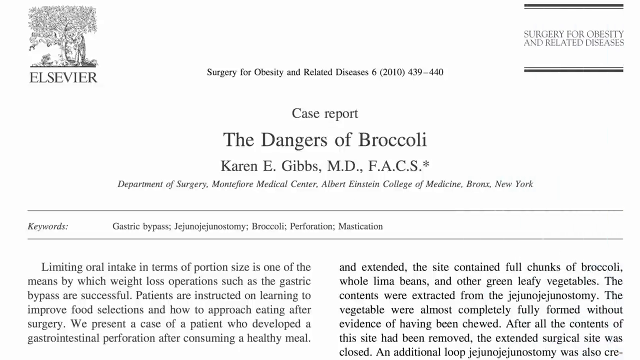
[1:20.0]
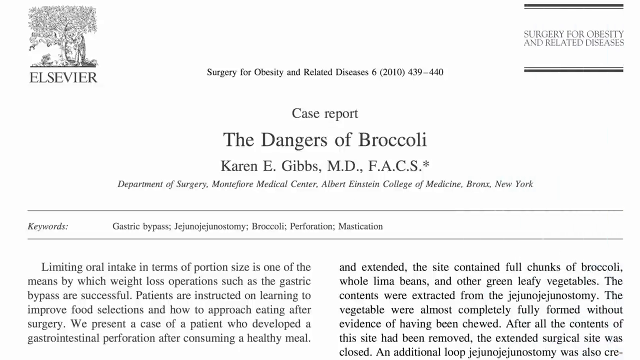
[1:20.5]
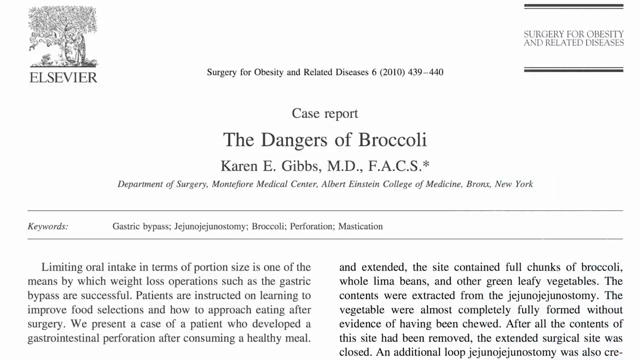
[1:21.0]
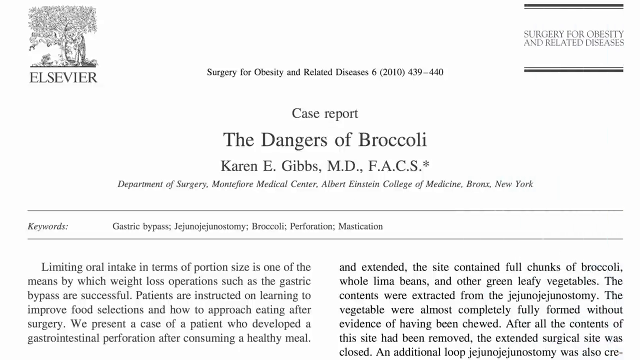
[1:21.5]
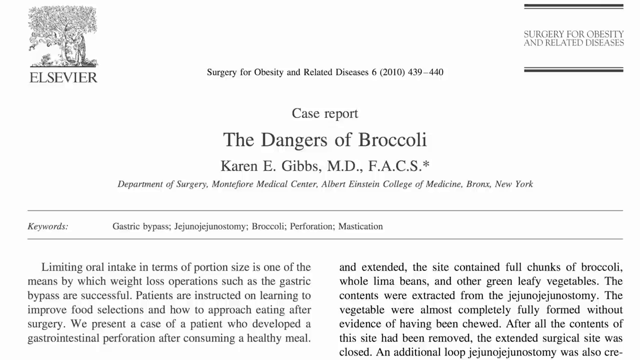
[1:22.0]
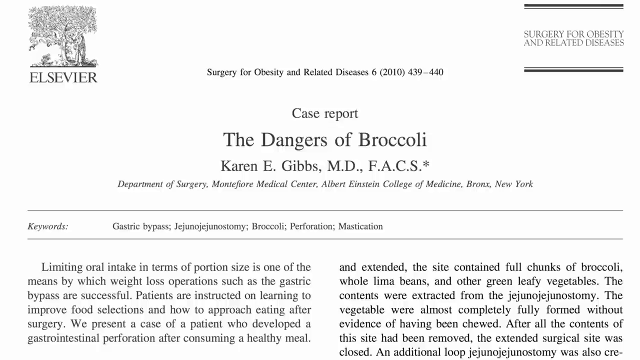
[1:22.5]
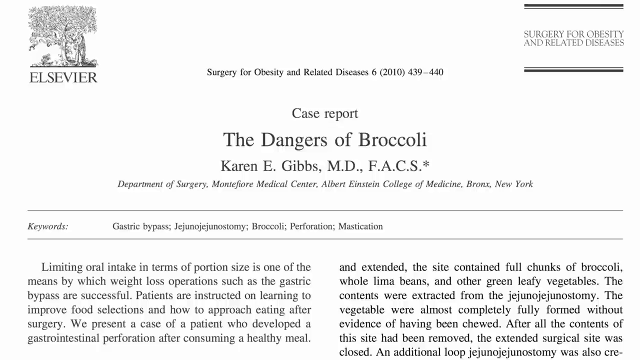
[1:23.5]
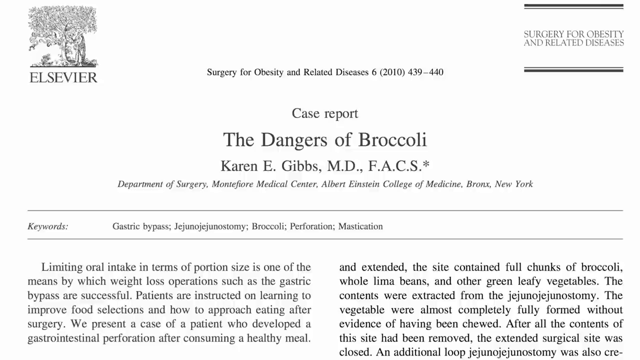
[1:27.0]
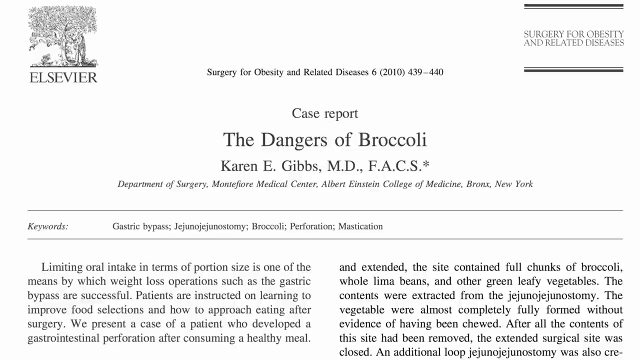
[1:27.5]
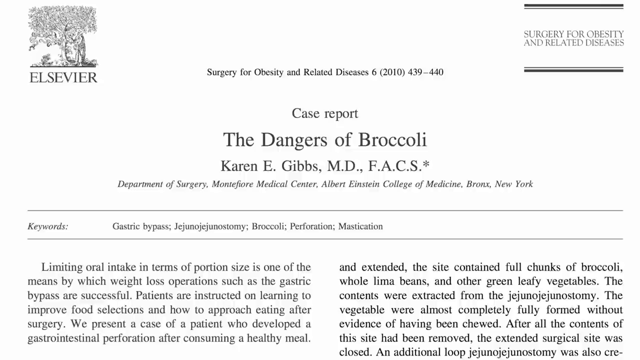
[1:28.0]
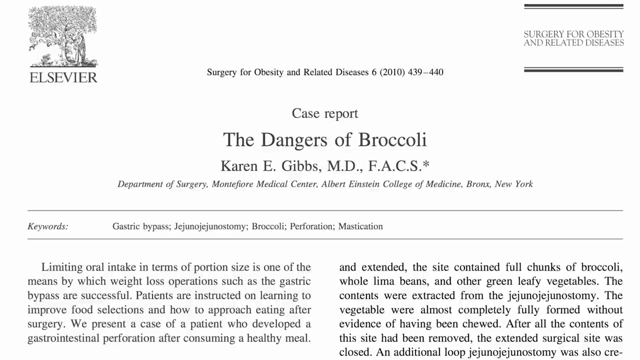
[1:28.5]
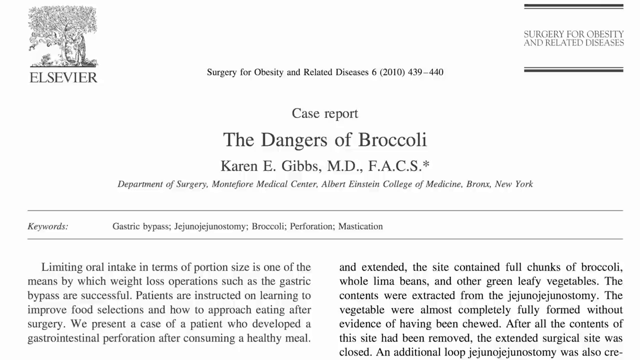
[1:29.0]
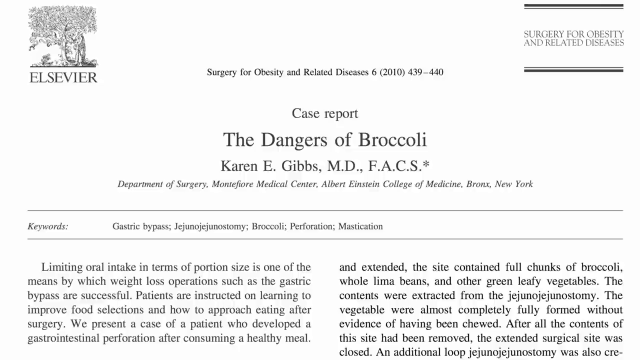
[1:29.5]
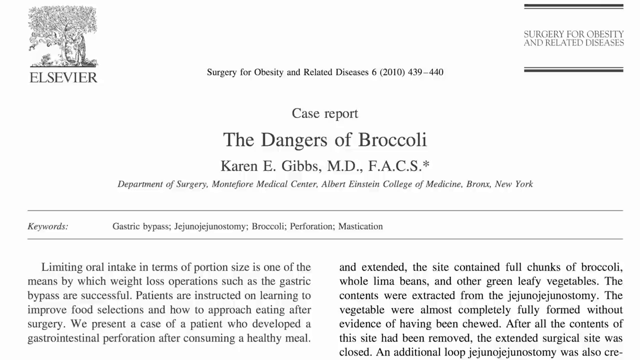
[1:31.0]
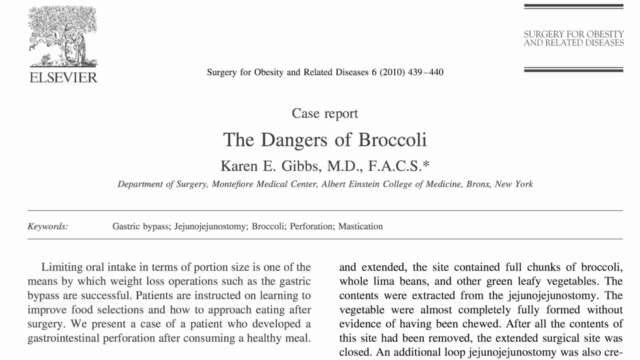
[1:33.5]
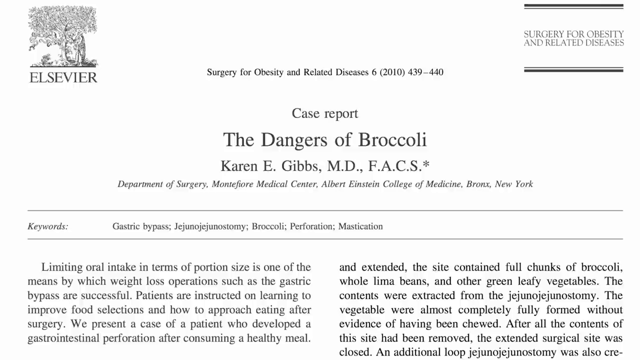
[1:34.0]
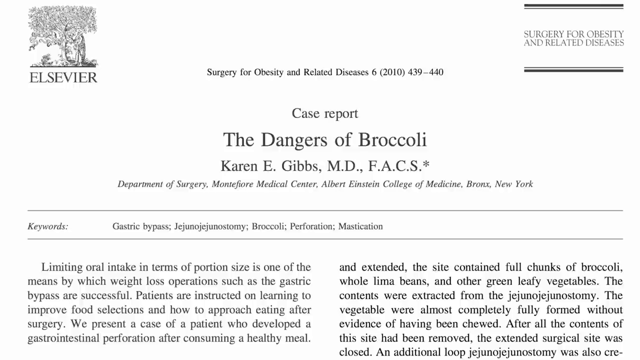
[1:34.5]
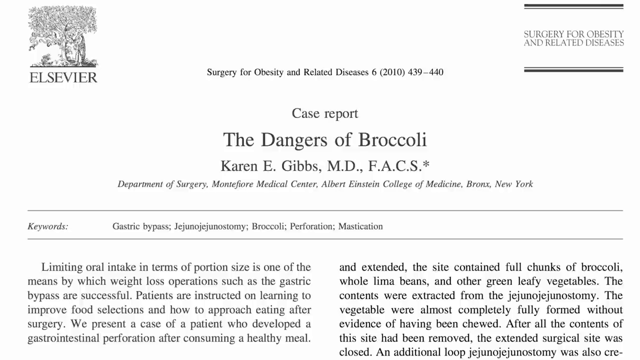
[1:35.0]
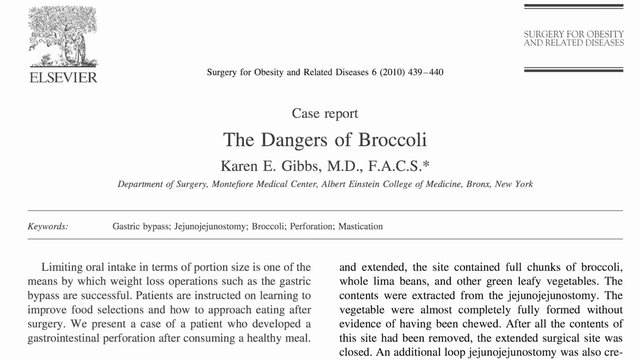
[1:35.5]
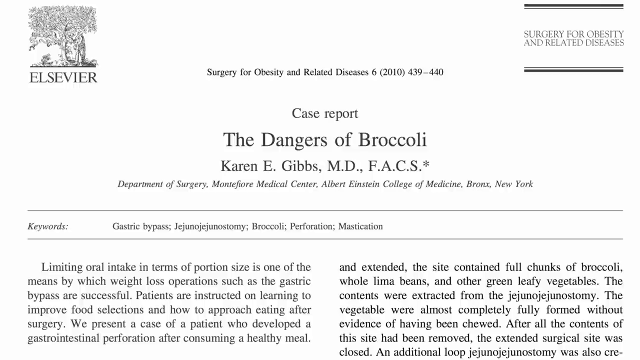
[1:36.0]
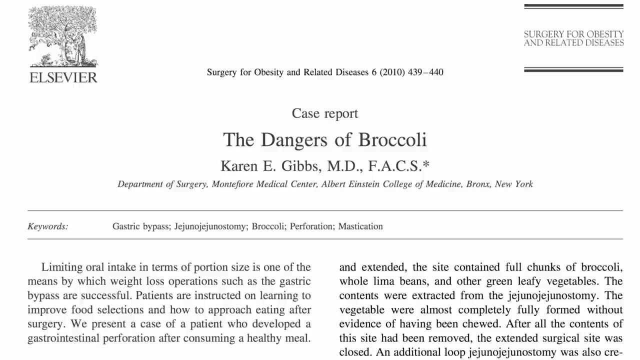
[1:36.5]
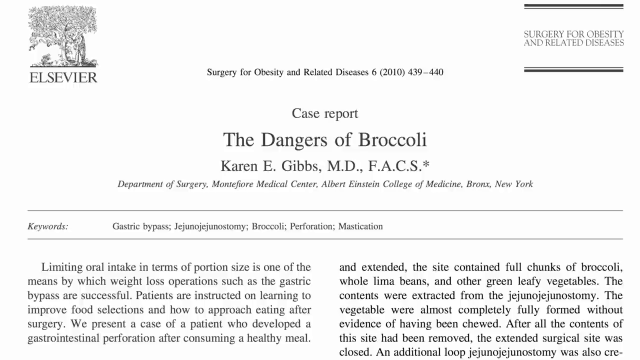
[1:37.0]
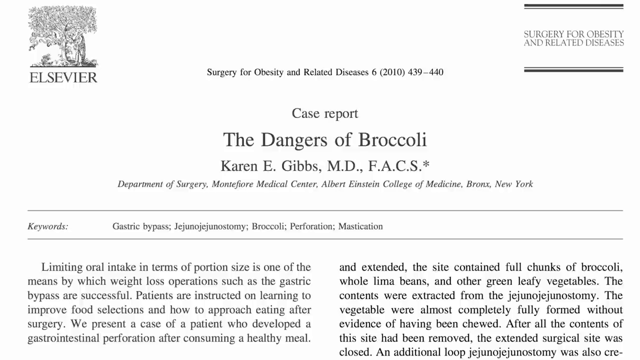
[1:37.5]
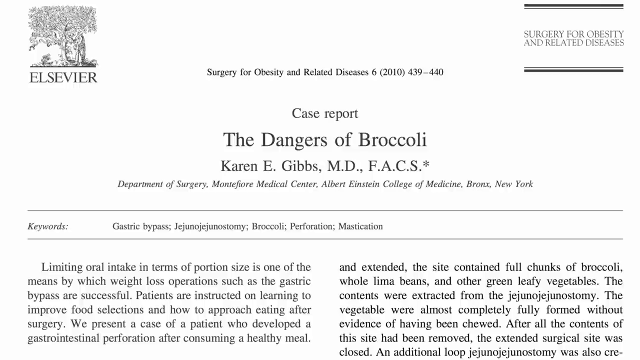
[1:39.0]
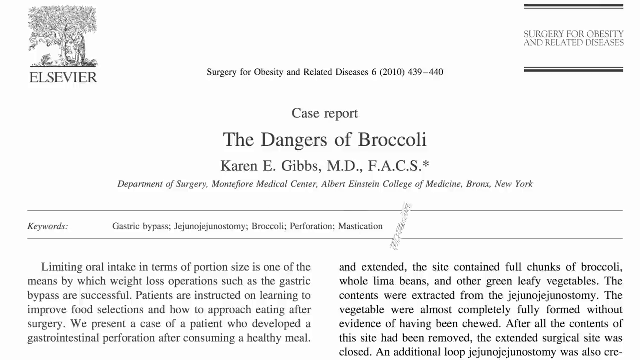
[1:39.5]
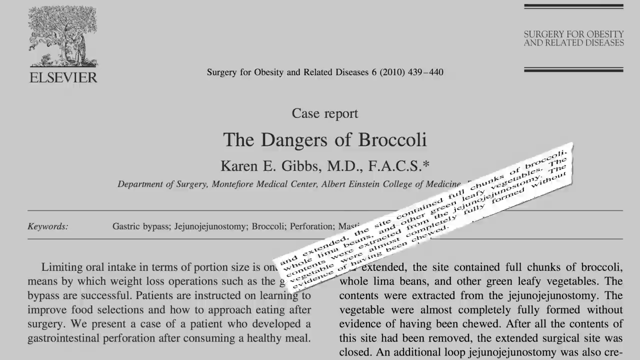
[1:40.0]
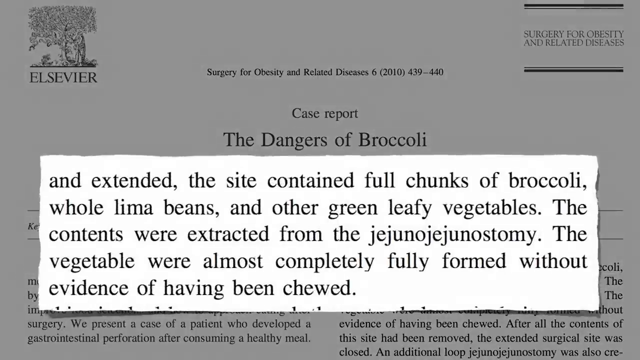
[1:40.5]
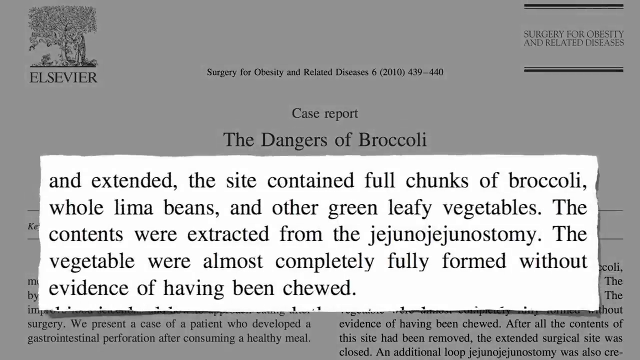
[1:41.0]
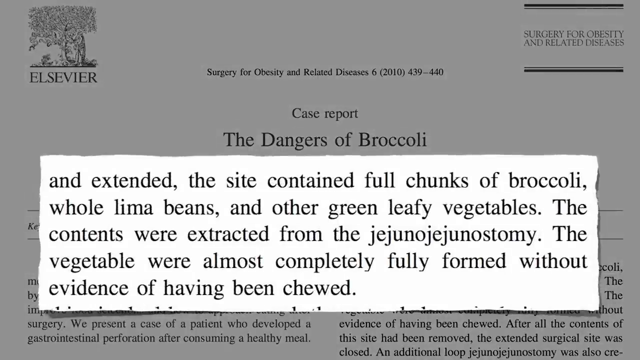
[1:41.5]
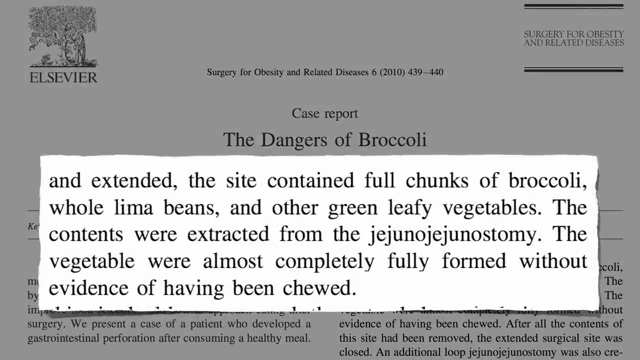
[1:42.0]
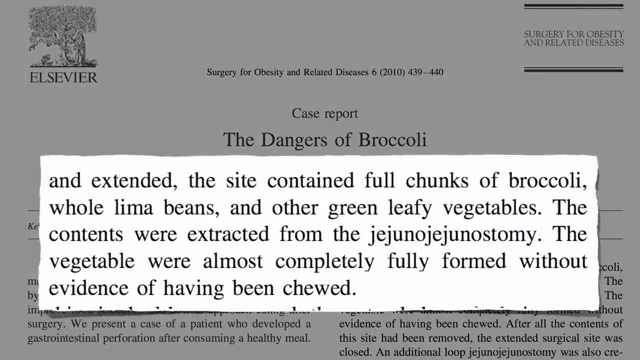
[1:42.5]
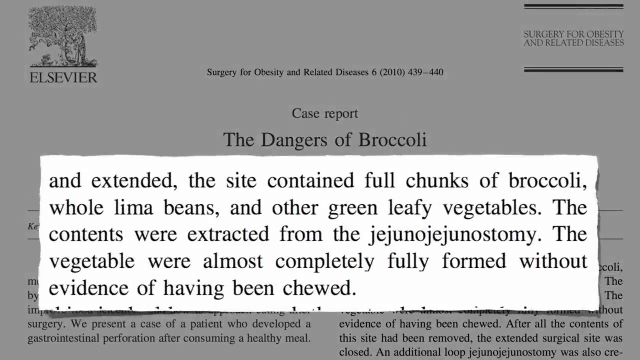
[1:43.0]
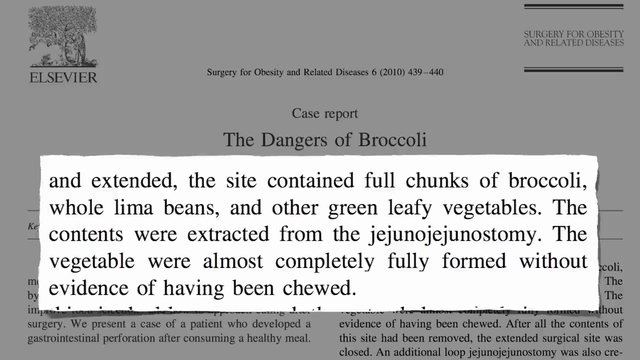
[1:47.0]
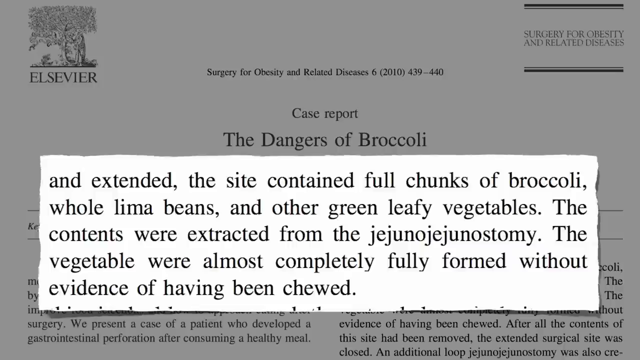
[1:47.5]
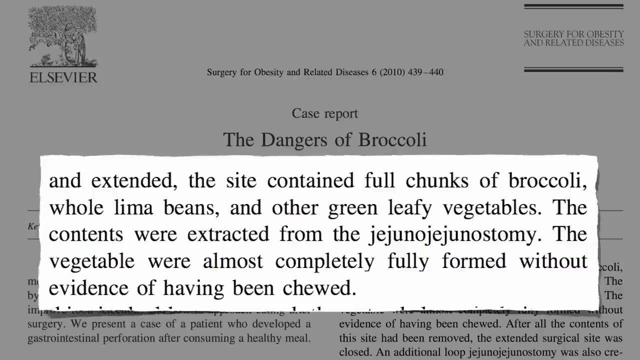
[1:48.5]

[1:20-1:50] The full journal article, "dangers of broccoli", stays on screen for a few seconds. Then an animation cuts out part of a paragraph and zooms in closely on it, with the full article blurred in the background and the small highlighted portion in front. The highlighted text includes "contained full chunks of broccoli whole lima beans and other green leafy vegetables" and "the vegetables were almost completely fully formed without evidence of having been chewed". The zoomed portion then closes and the full article is shown. The article has a white background, with the publisher logo in the top left corner and the journal name, Surgery for Obesity and Related Diseases, in the top right corner.